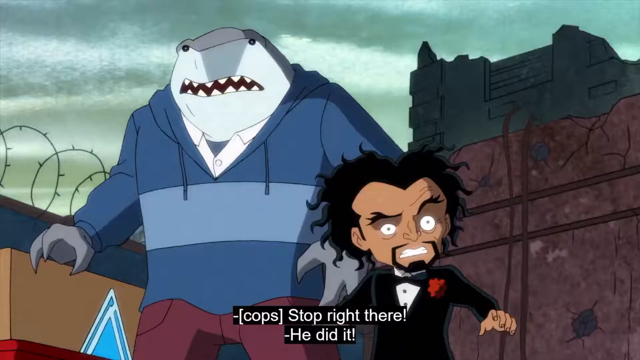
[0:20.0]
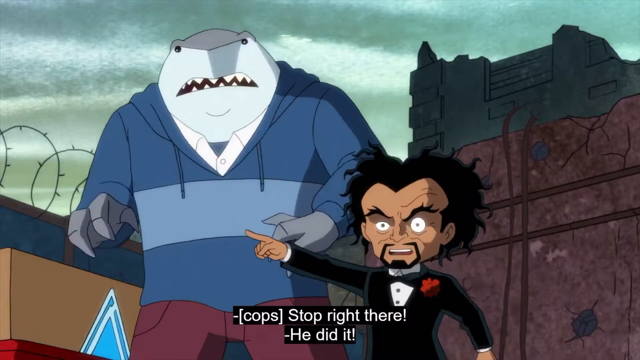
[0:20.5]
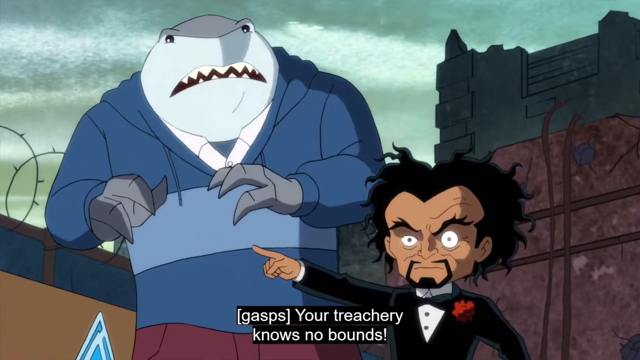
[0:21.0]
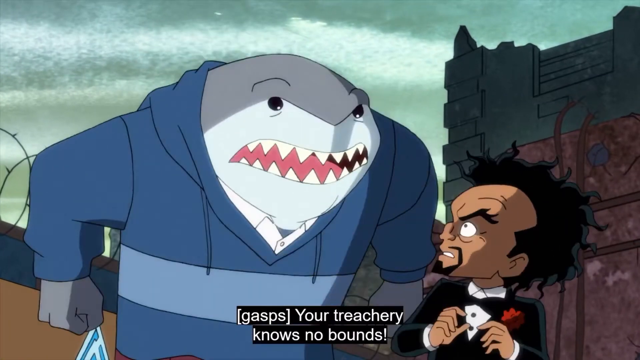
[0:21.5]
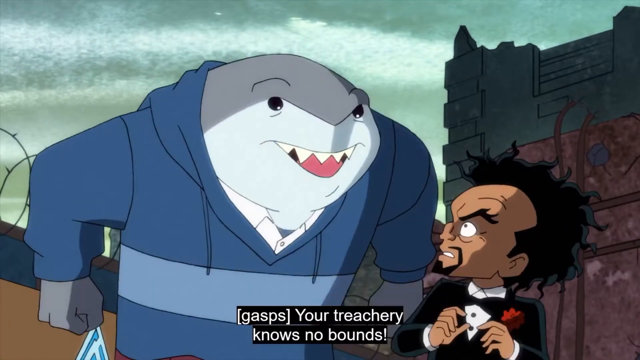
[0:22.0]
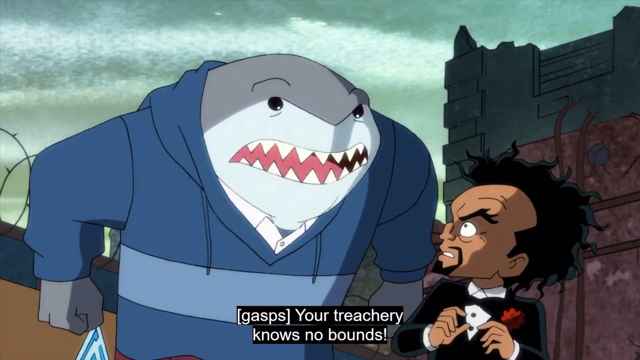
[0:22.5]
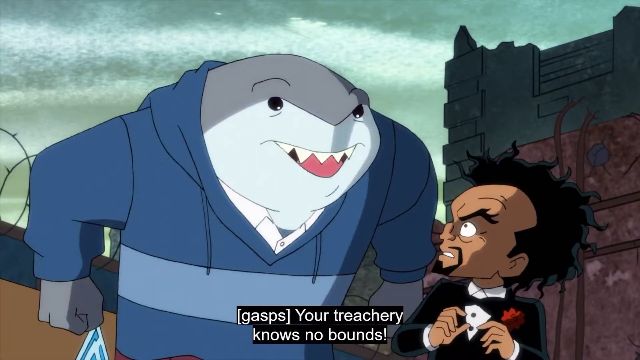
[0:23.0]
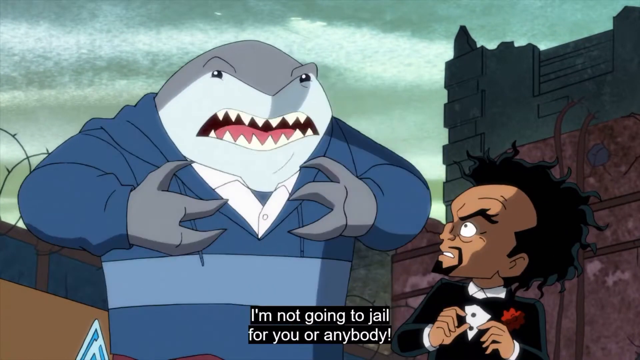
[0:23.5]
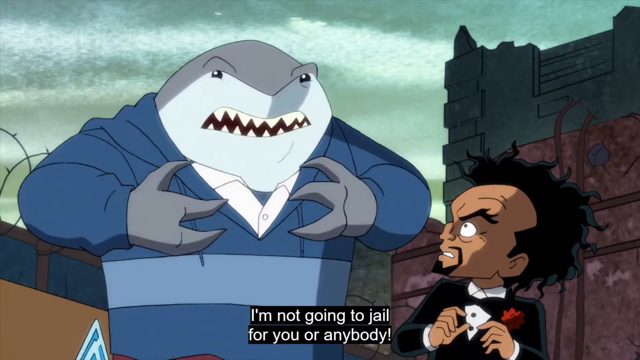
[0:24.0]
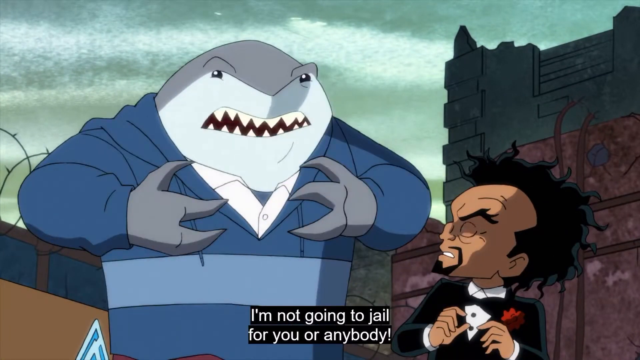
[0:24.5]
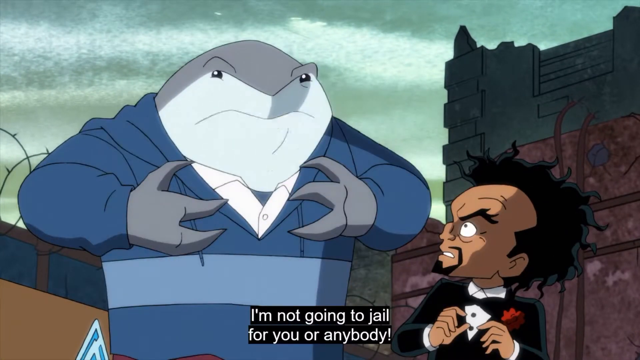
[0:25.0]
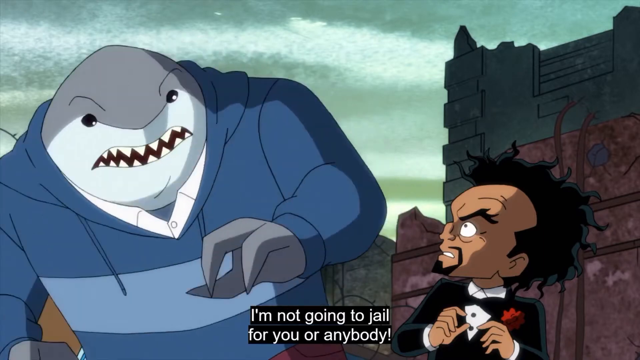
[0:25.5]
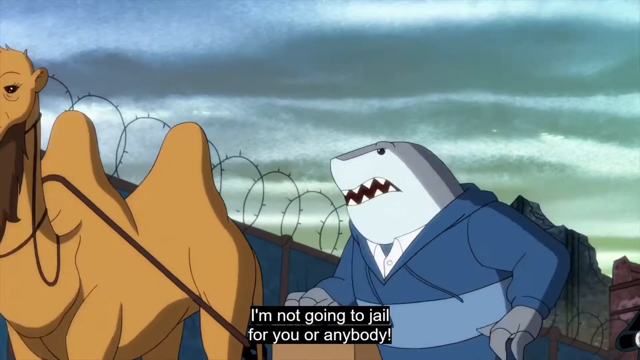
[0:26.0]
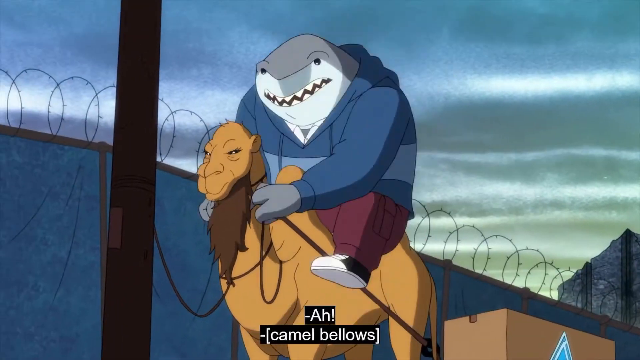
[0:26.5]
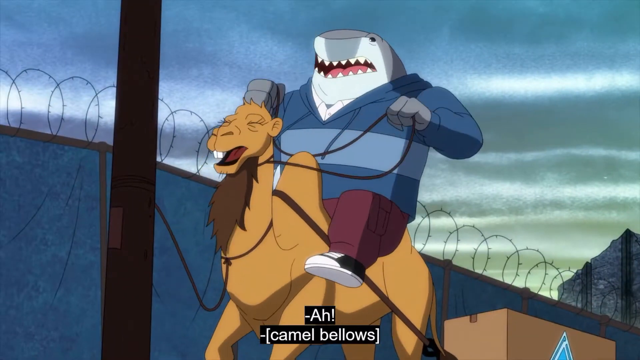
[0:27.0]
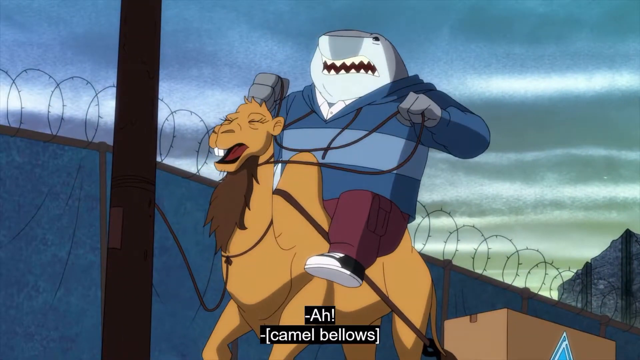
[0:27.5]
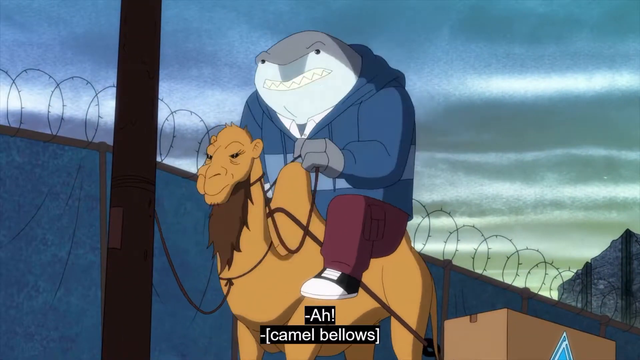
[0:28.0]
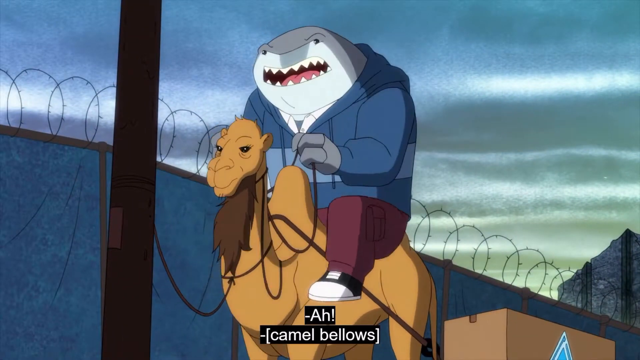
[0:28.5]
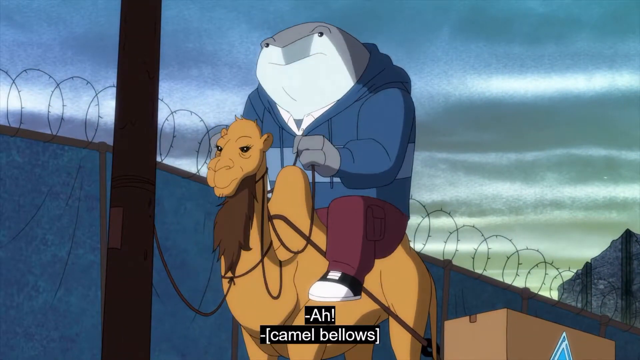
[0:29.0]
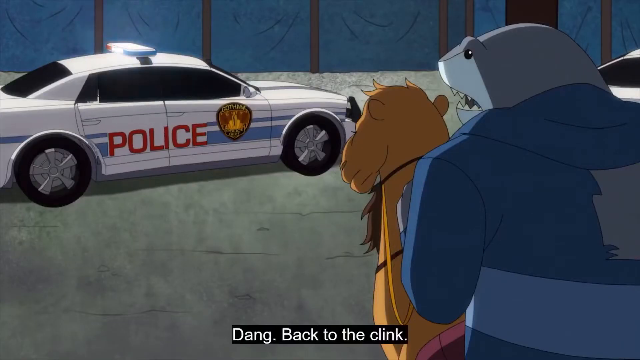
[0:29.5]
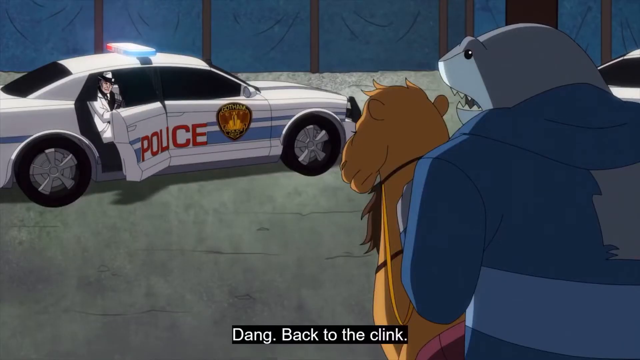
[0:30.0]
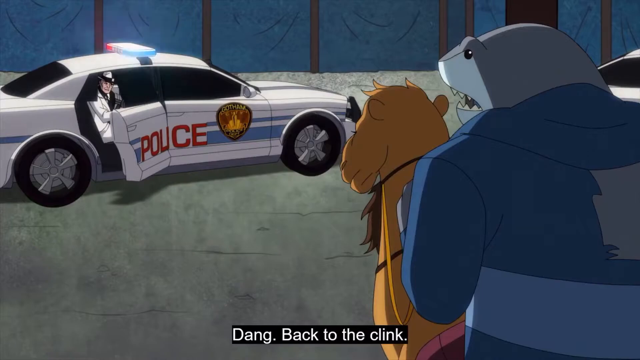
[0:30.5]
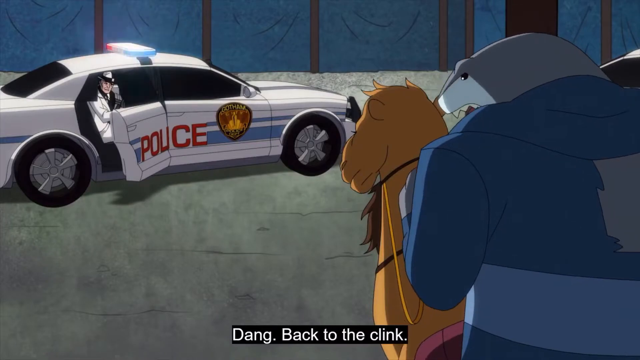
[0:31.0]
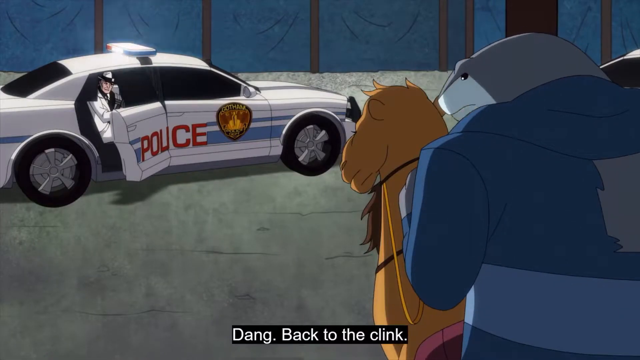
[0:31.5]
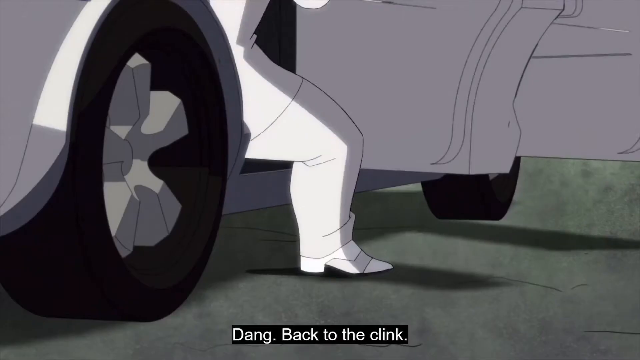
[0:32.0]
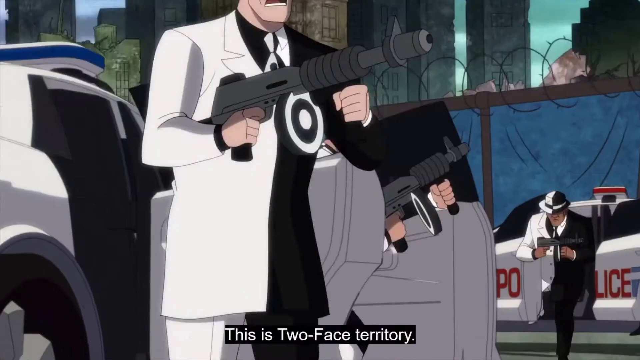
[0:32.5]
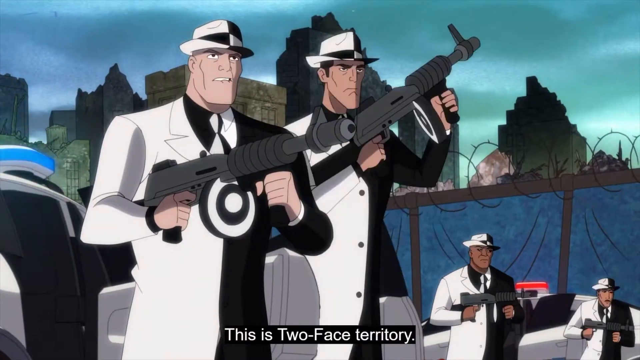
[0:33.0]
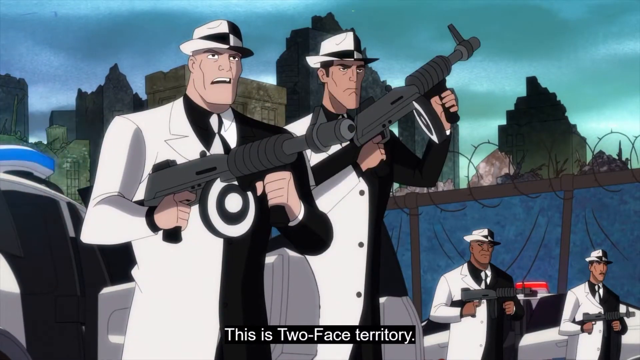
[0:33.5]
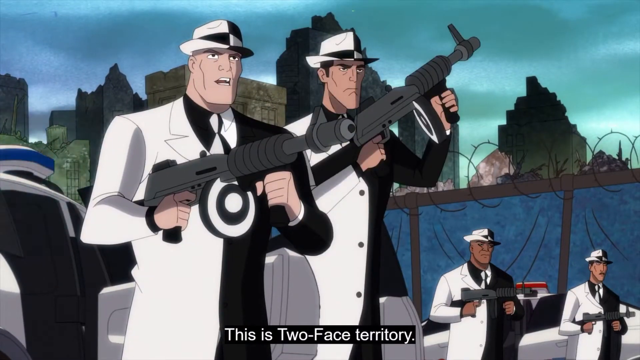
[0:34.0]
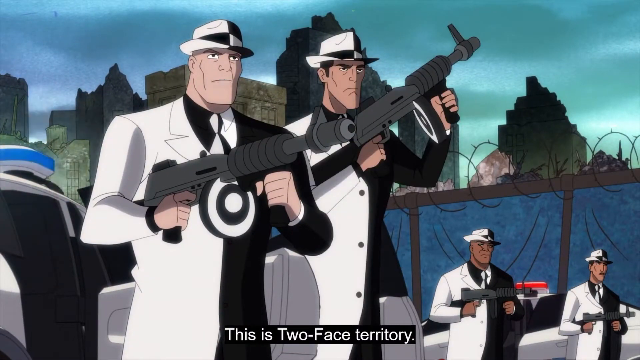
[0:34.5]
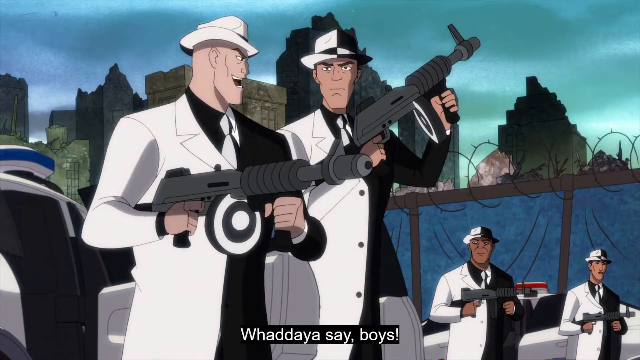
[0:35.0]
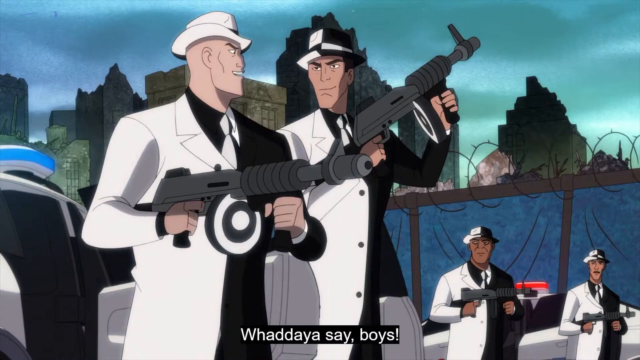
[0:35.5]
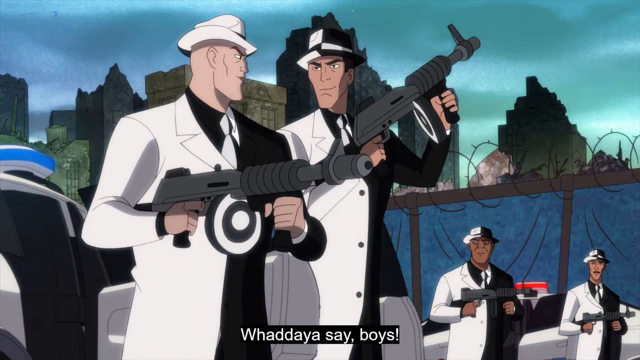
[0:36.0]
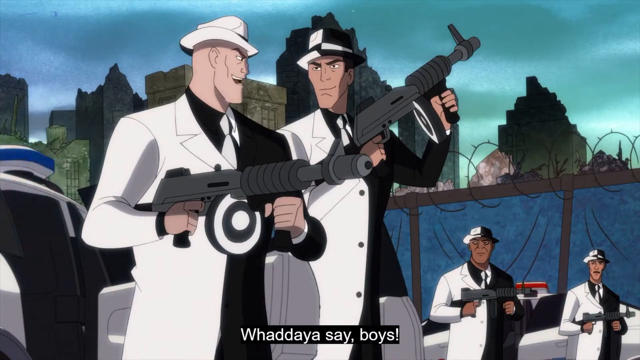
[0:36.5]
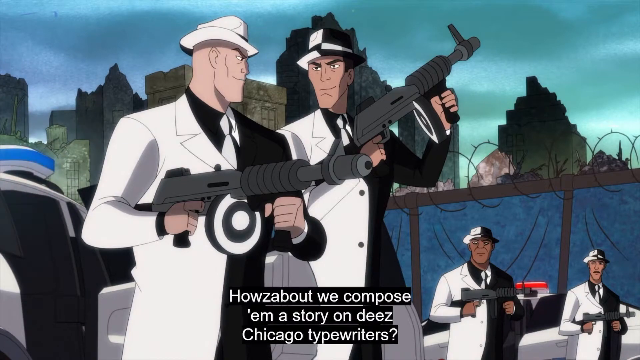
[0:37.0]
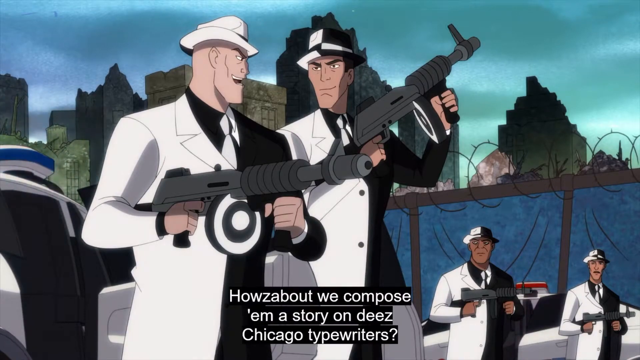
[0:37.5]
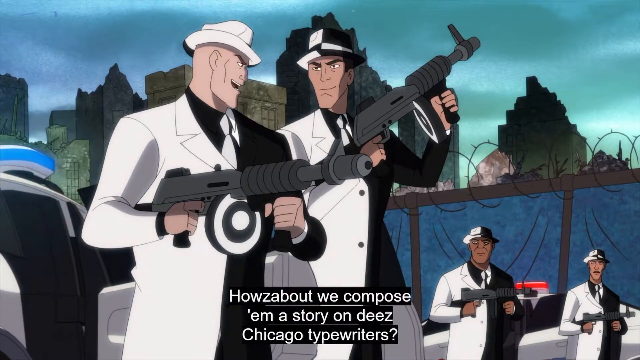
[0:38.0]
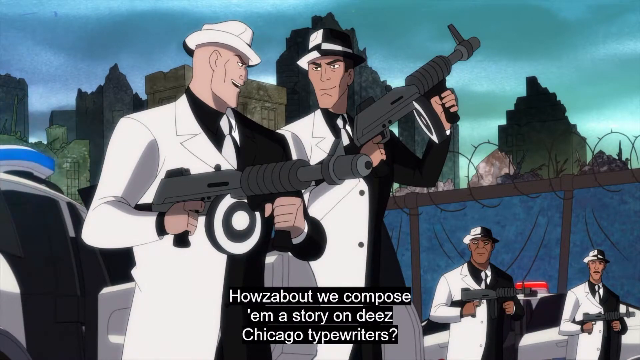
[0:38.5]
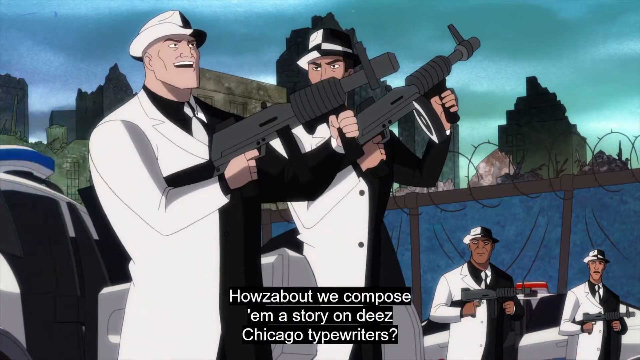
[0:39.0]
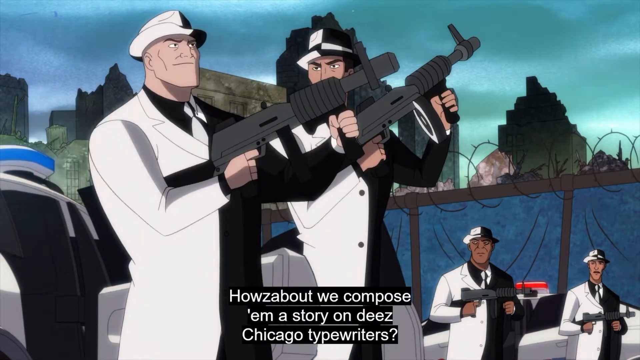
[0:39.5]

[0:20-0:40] The shorter man is surprised, and as soon as the cops tell them to stop right there, he throws the shark under the bus, pointing at him and saying that he did it. The shark gasps in surprise and tells the man, "your treachery knows no bounds," then, holding his chest in a defensive manner, says he is not going to jail for him or anybody. He then jumps on top of the camel, or the camel bellows, and he attempts to run away, but the camel stands still. The back door of one of the police cars opens, and someone in a white suit comes out, followed by three other police officers, who are actually wearing white and black suits. They proclaim, "This is Two-Face Territory." They are all holding big guns and begin threatening and taunting the pair.